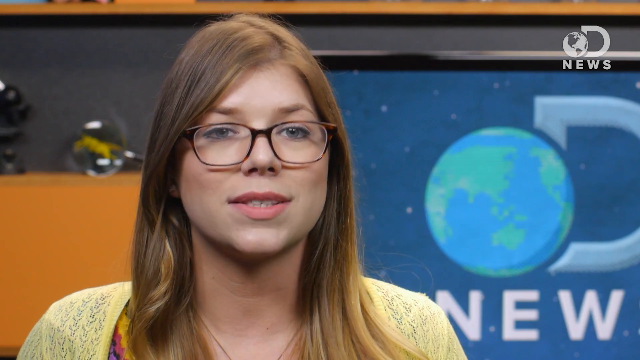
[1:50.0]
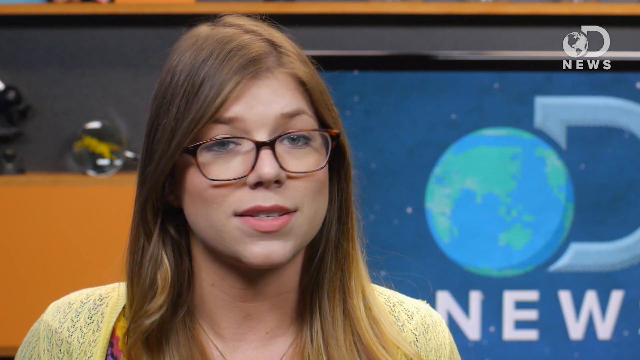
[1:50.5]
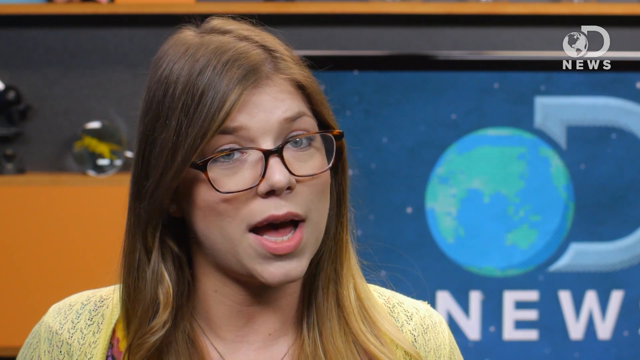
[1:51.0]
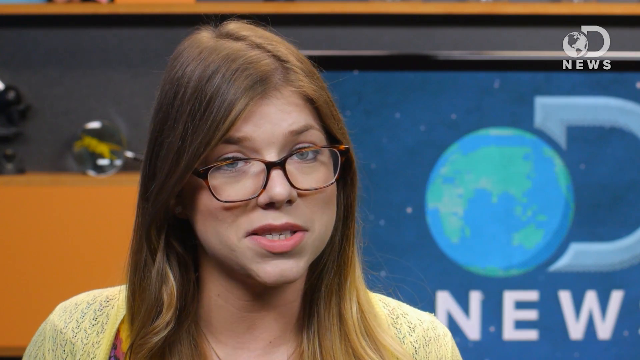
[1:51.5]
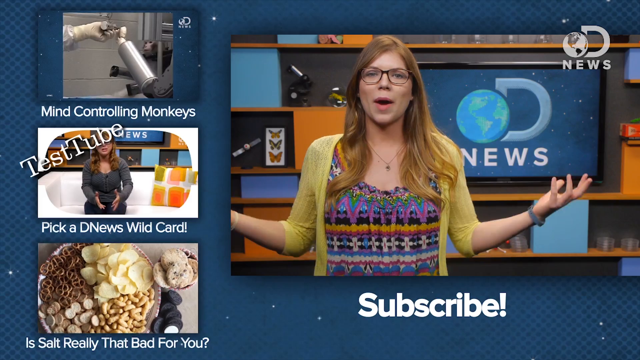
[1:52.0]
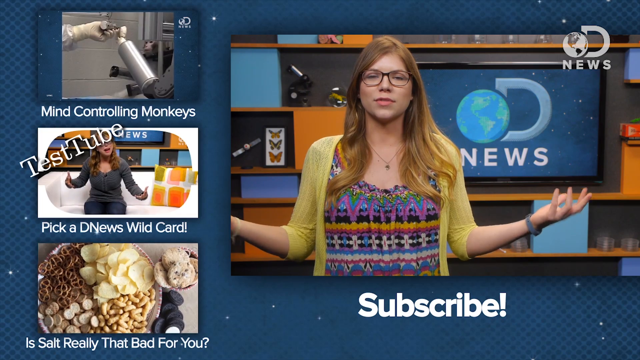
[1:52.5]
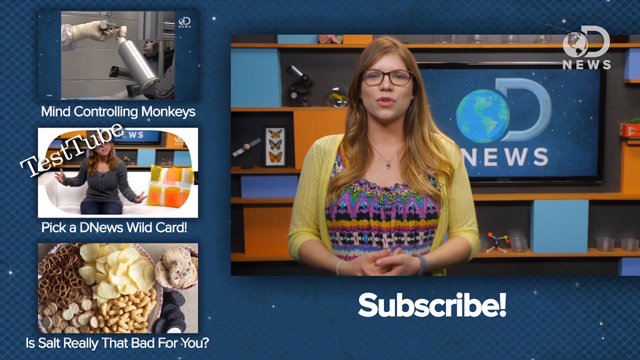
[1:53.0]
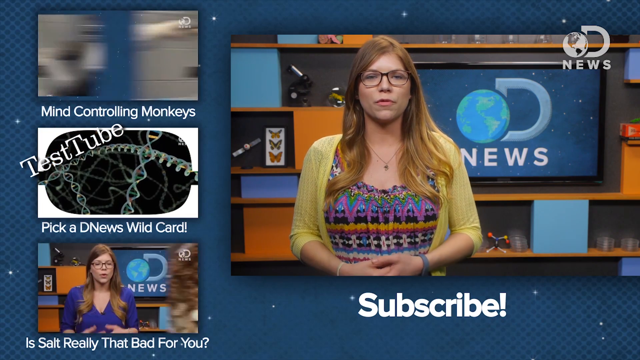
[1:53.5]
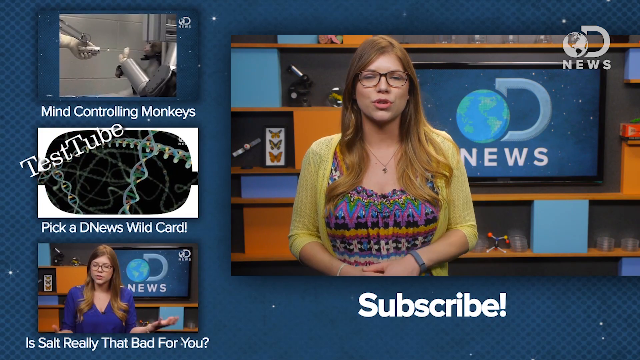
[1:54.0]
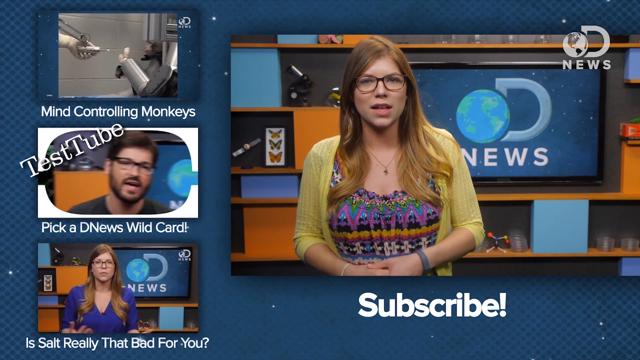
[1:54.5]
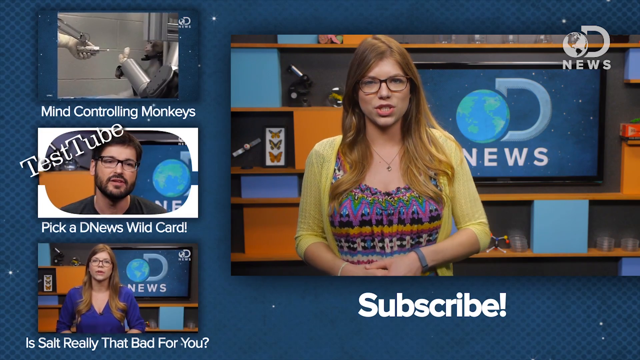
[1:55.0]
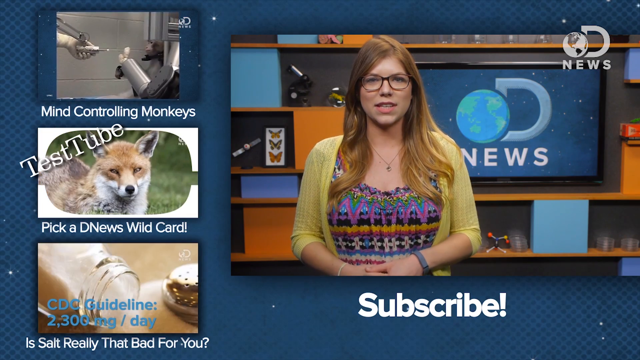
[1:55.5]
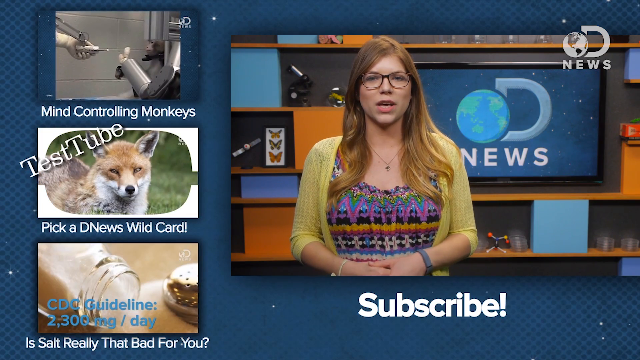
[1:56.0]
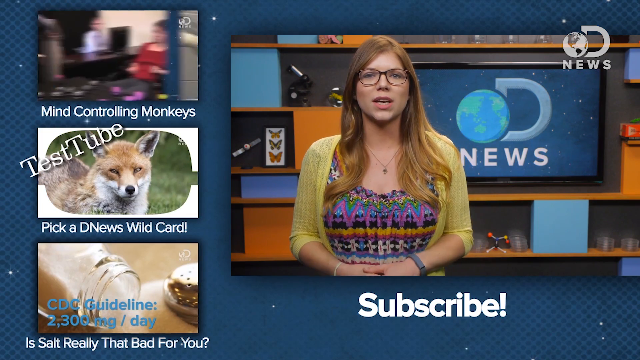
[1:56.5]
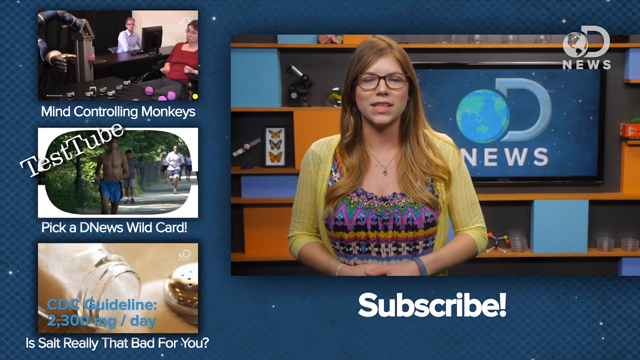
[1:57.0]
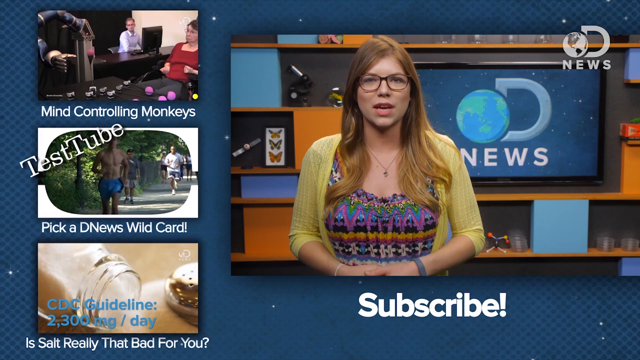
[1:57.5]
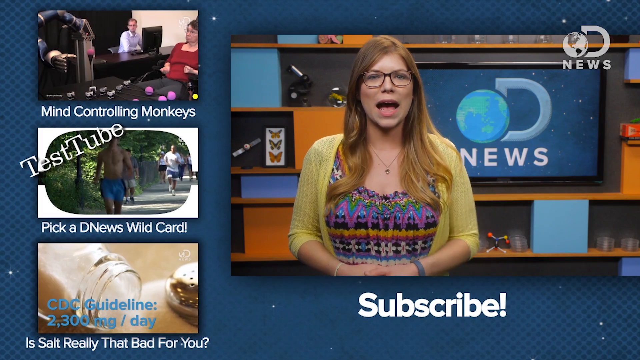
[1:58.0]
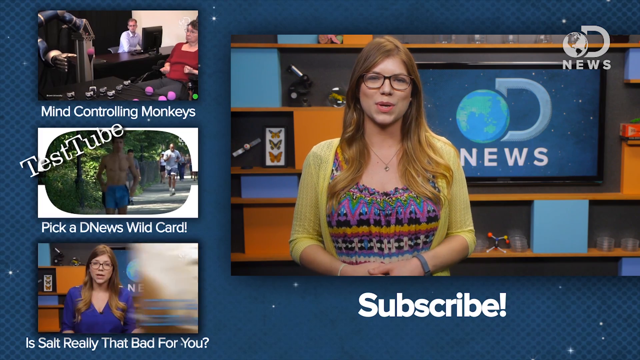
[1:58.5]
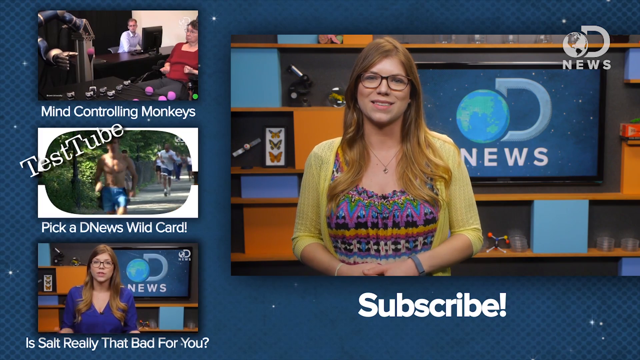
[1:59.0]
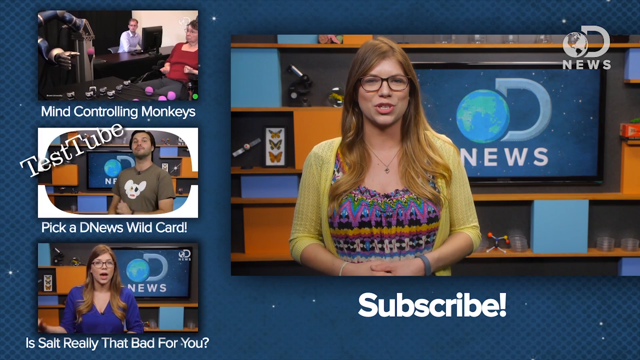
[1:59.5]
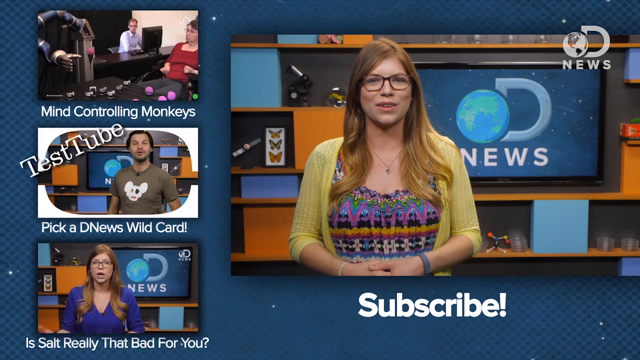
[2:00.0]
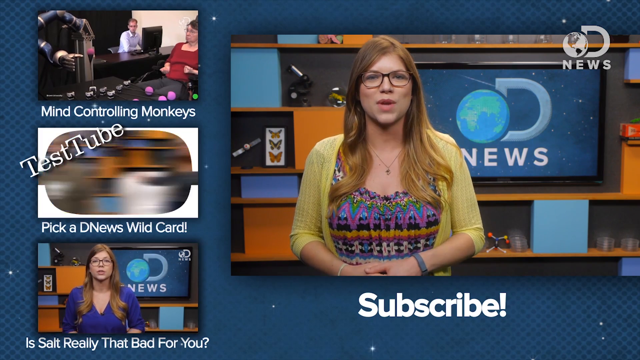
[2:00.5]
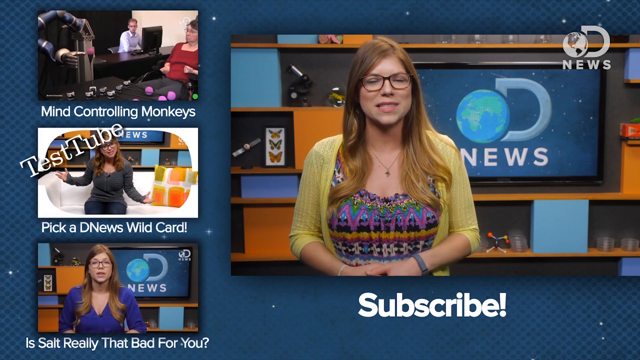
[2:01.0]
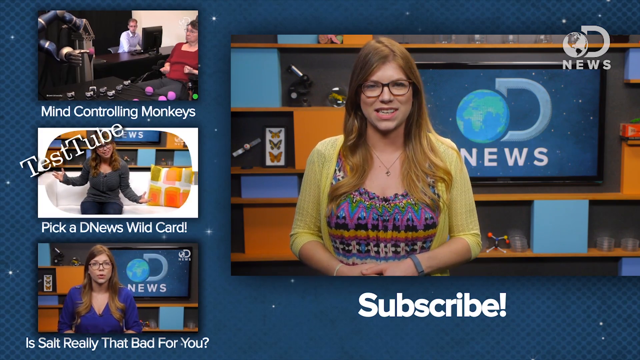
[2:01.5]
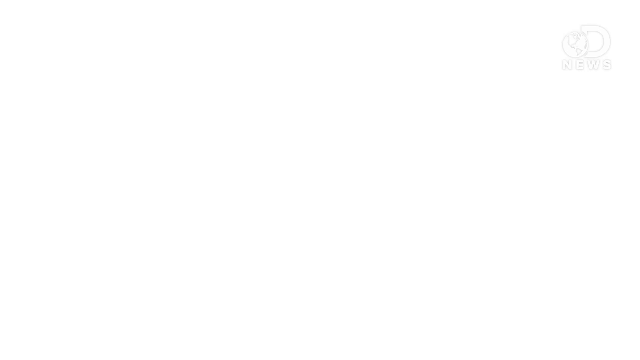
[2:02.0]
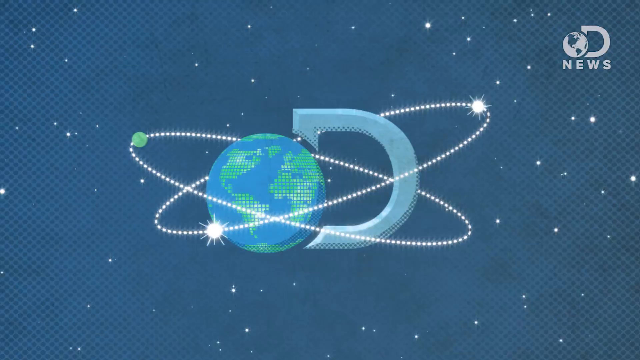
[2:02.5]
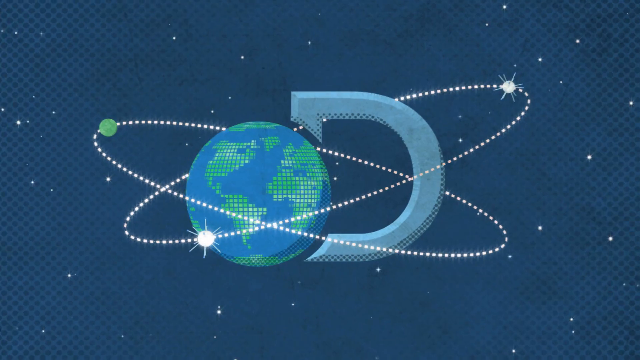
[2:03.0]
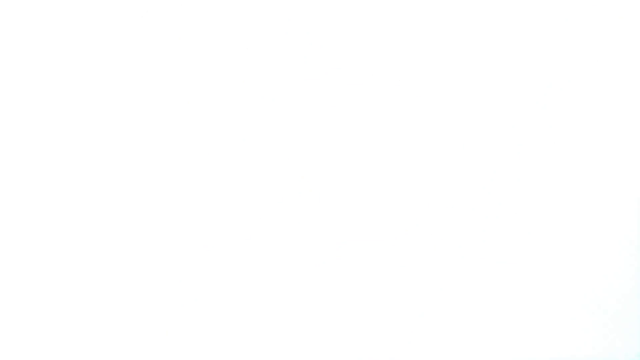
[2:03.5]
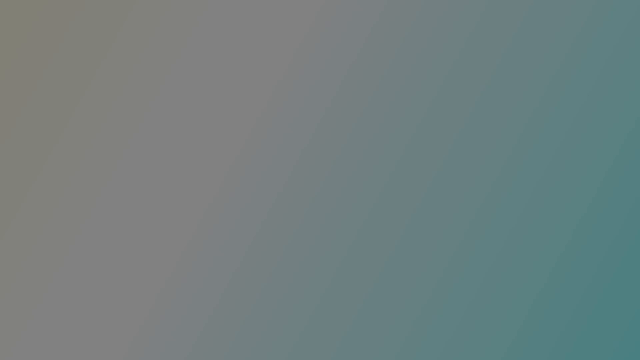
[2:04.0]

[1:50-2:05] In a shoulders-up shot, the reporter in the Discovery News studio, wearing glasses and a yellow cardigan, speaks into the camera. The video then cuts to its end screen: the reporter is still seen standing in the studio, but now in a smaller screen that takes up most of the right-hand half of the image. She throws her hands out to her sides, elbows bent slightly more than 90 degrees, palms upward and fingers curled upward, then folds them back together in front of her and leans forward slightly as she continues speaking. With her hands folded in front of her, she bounces her elbows against her sides. Underneath her box, the word "subscribe!" appears in white font. On the left-hand side of the screen are four boxes showing thumbnails of other videos with their titles, including "Mind-Controlling Monkeys," "Pick a DNews Wildcard," and "Is Salt Really That Bad for You?" As she finishes speaking, the video cuts to a white screen and then back to the Discovery News logo.